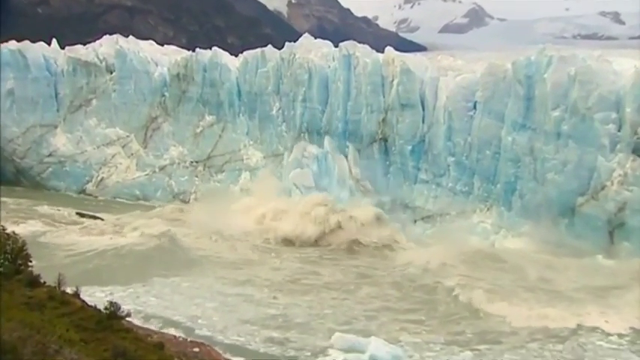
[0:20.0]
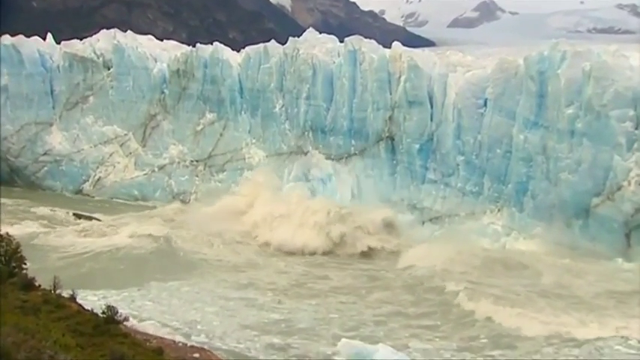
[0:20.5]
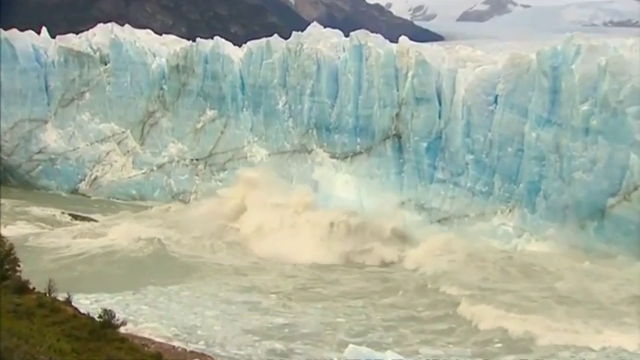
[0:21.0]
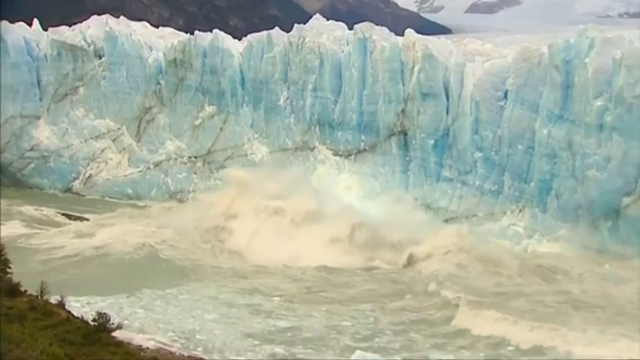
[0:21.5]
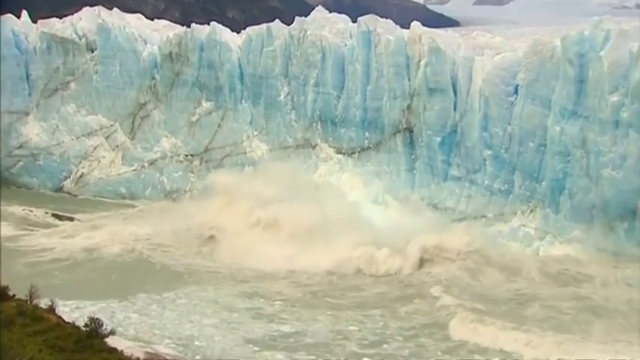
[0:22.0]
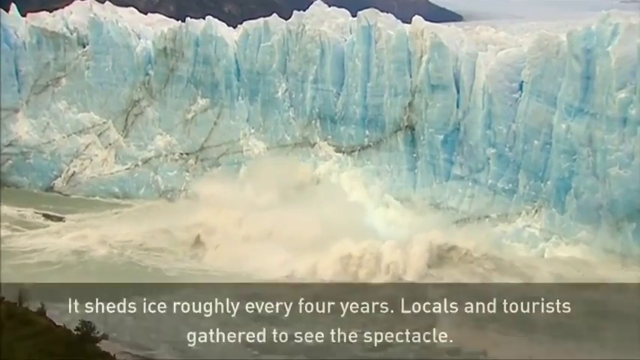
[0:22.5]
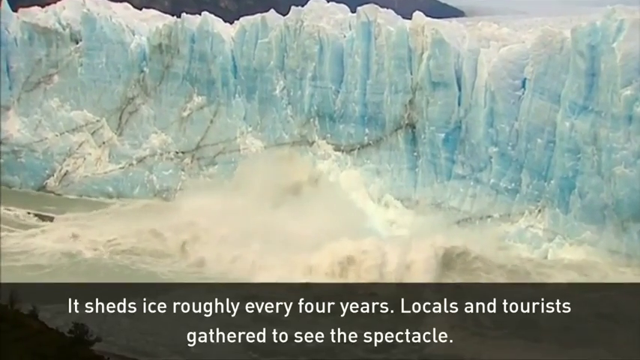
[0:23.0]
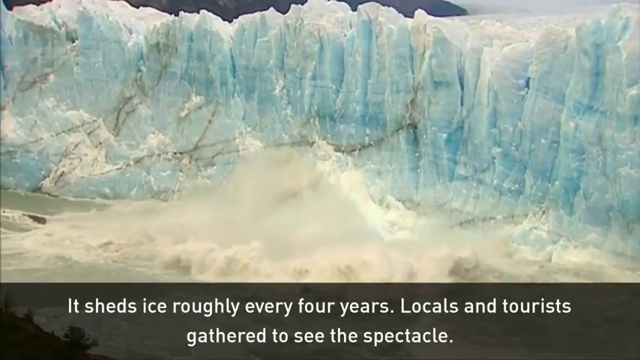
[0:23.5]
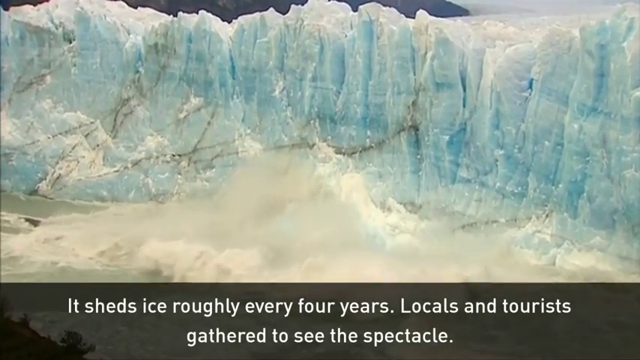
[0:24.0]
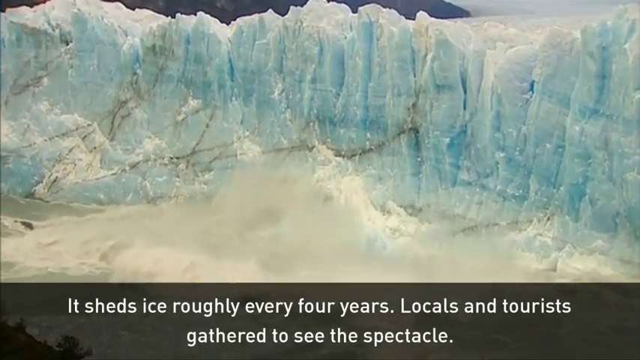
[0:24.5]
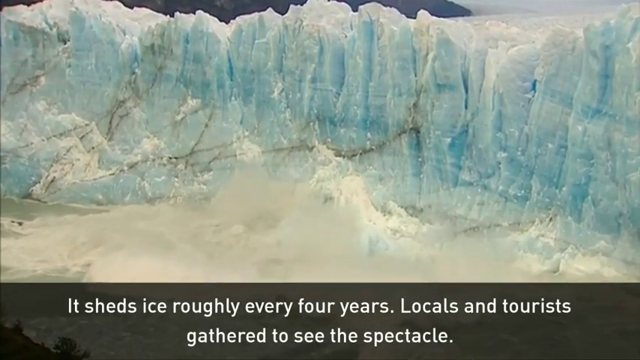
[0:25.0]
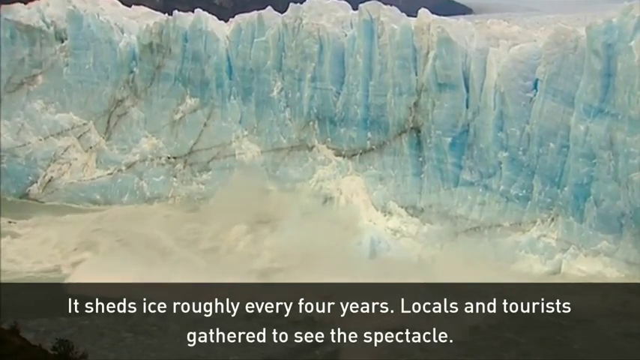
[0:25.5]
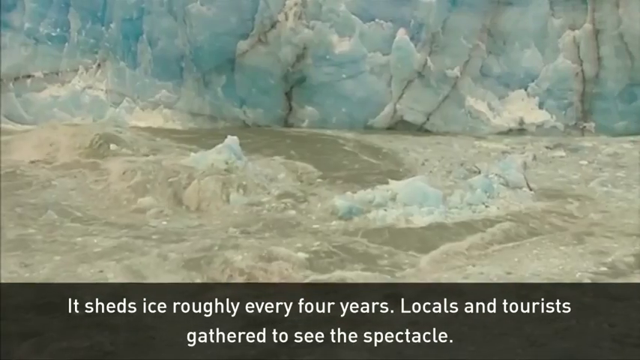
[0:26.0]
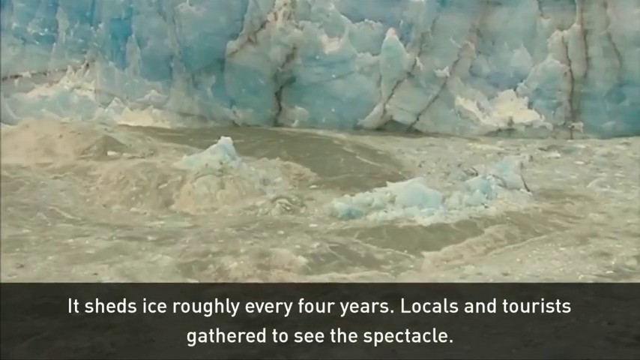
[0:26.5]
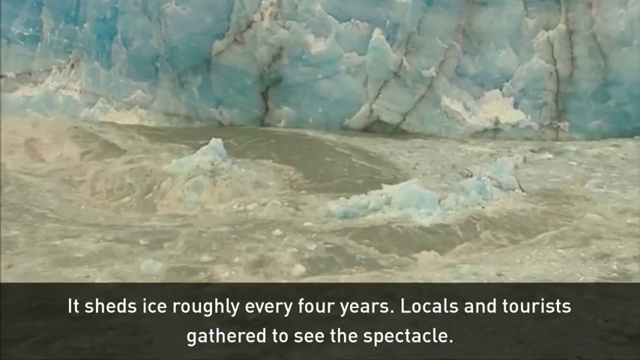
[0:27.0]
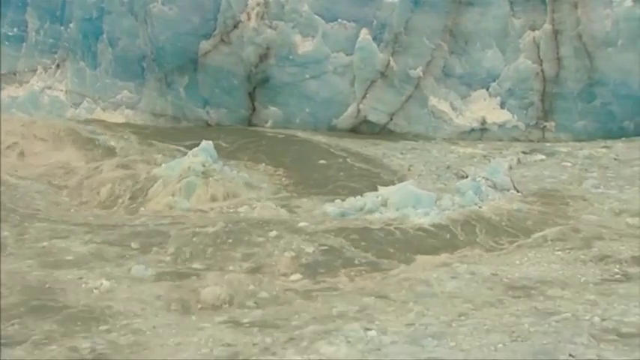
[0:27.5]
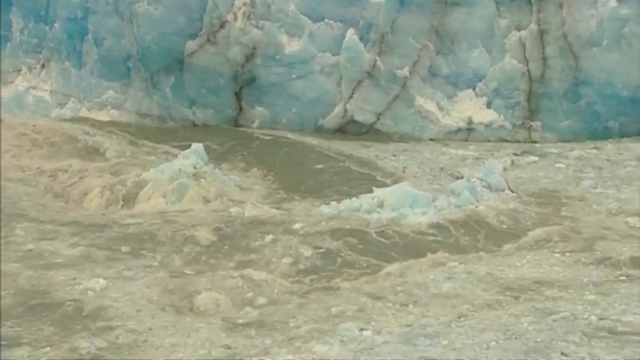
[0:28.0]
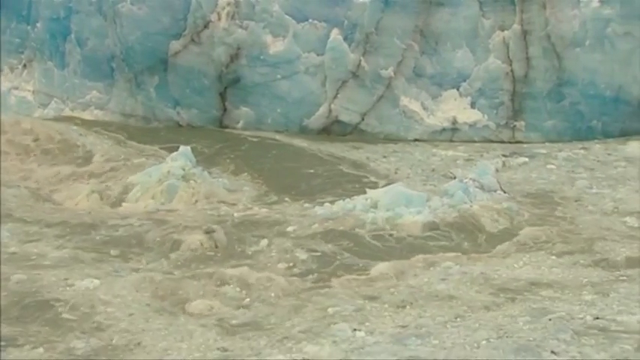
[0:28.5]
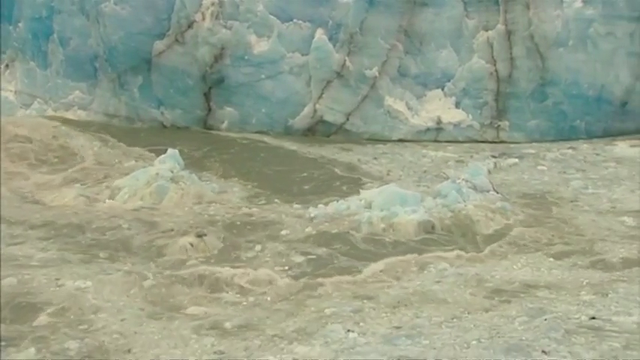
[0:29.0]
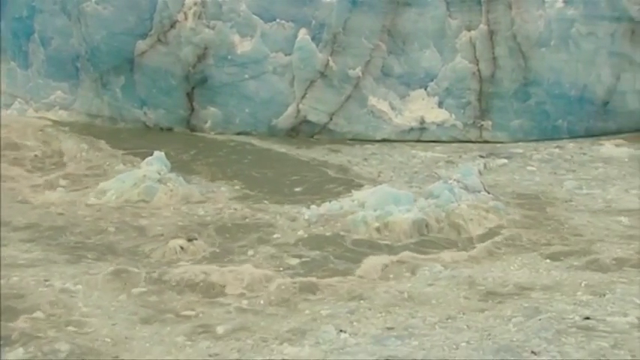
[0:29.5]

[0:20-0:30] A massive edge of ice runs across the entire top portion of the screen, looking at least probably 30, 40 to 50 feet high. On the bottom portion of the screen is a river of some sort. The center of the ice begins to fall, and a huge chunk drops into the water, causing massive waves that come toward the camera along with a massive splash. Next comes a close-up of the river moving left to right, with what is left of the edge of the ice formation in the background and big chunks of ice flowing down the river.